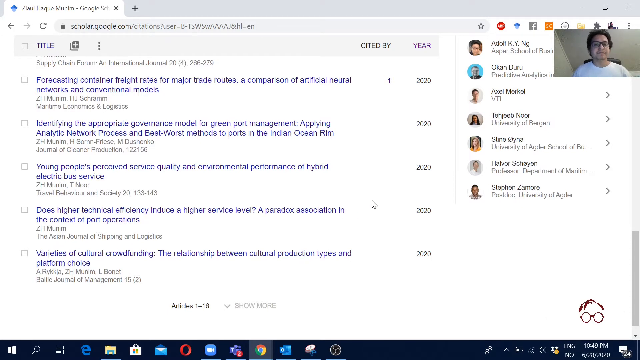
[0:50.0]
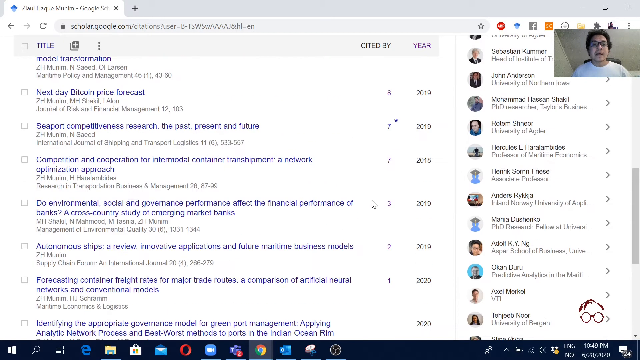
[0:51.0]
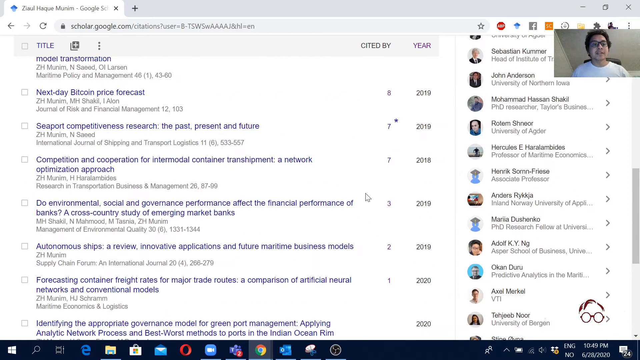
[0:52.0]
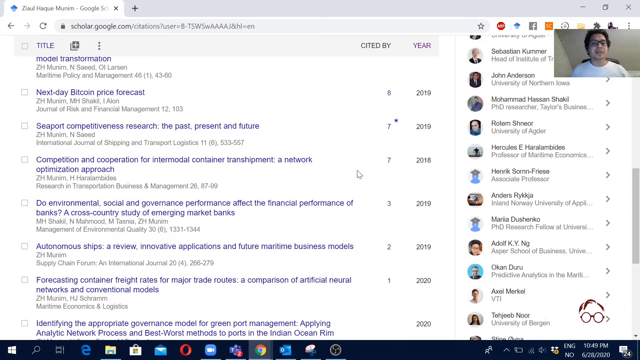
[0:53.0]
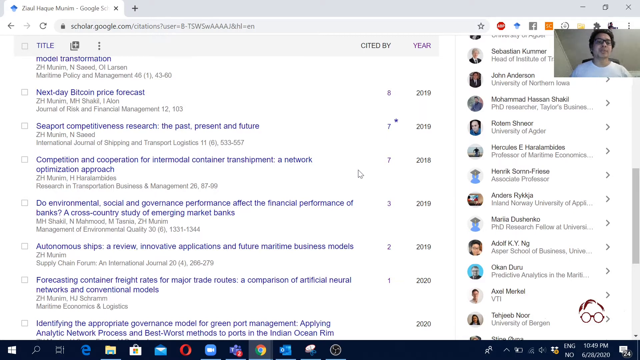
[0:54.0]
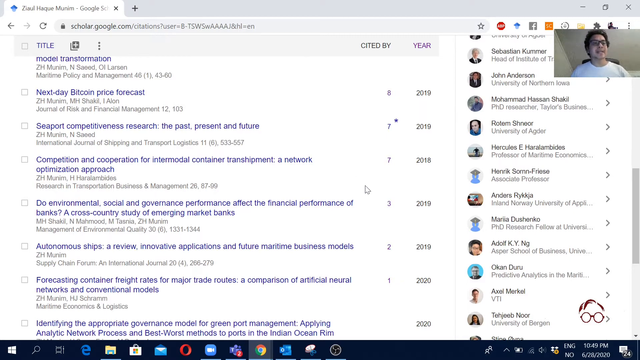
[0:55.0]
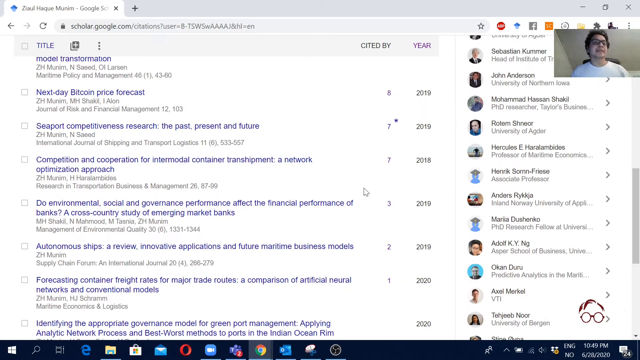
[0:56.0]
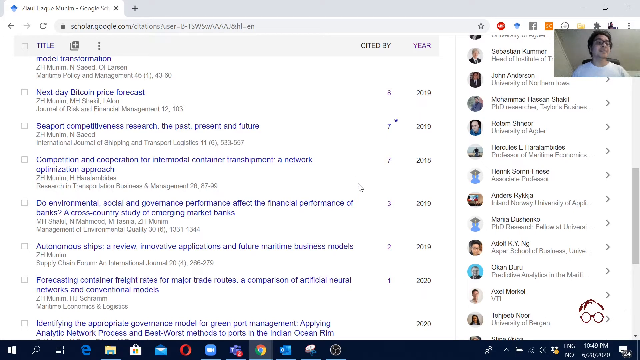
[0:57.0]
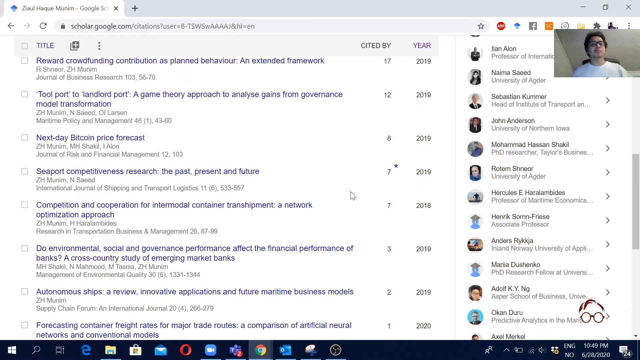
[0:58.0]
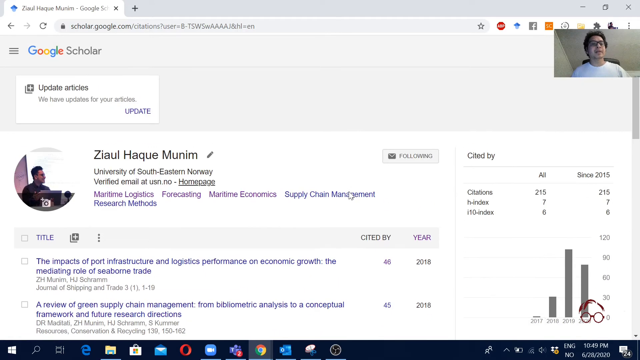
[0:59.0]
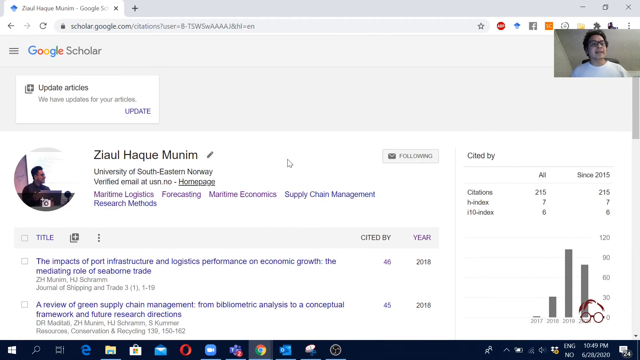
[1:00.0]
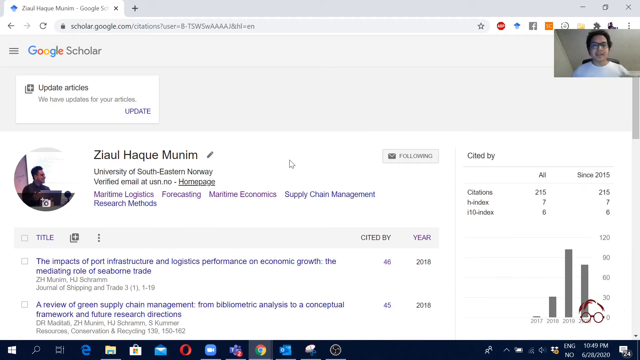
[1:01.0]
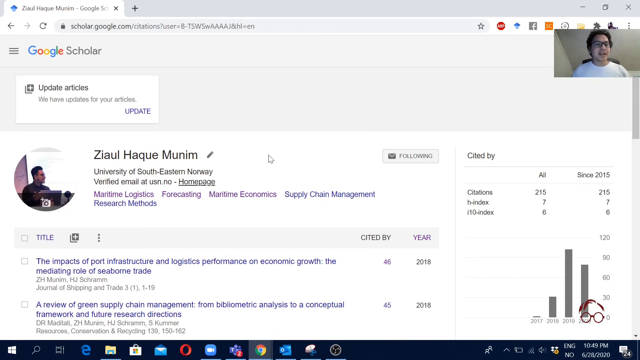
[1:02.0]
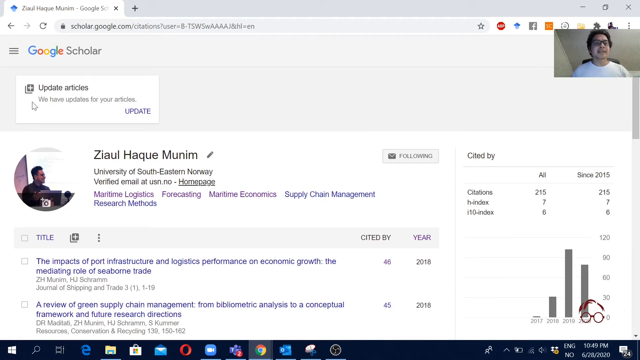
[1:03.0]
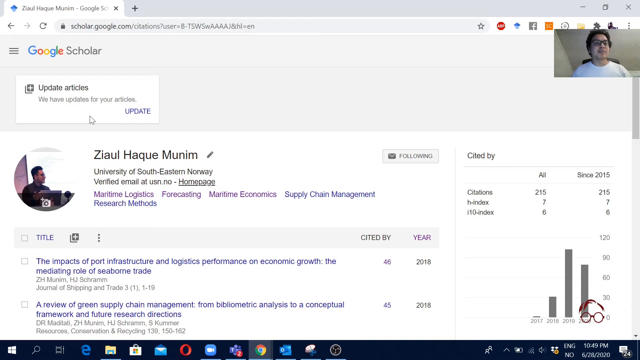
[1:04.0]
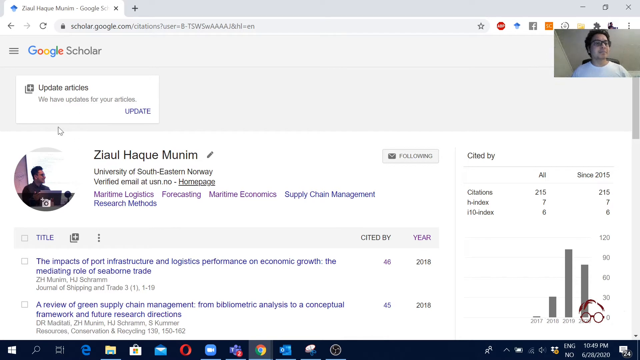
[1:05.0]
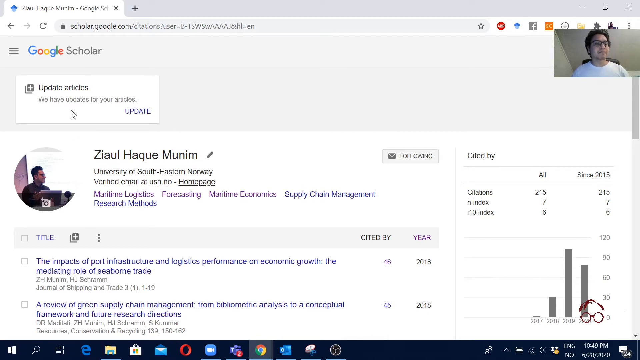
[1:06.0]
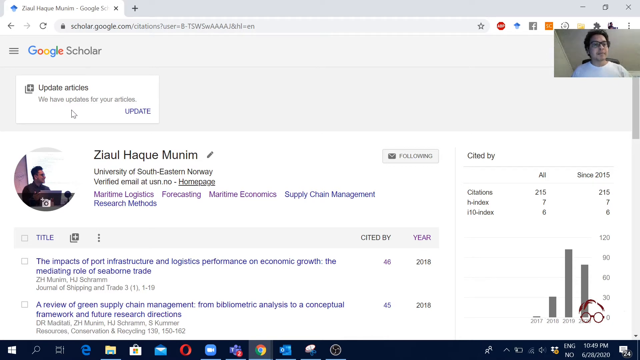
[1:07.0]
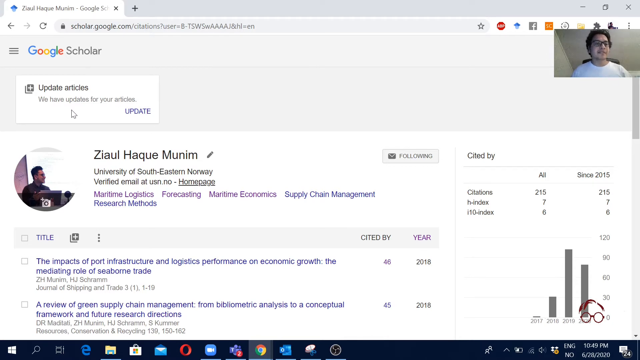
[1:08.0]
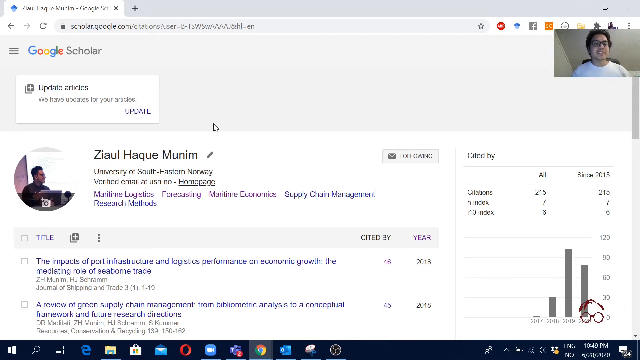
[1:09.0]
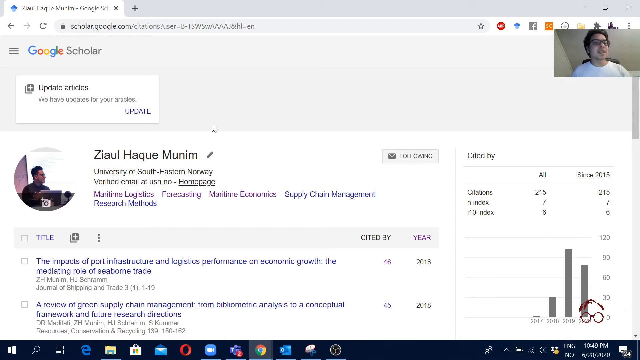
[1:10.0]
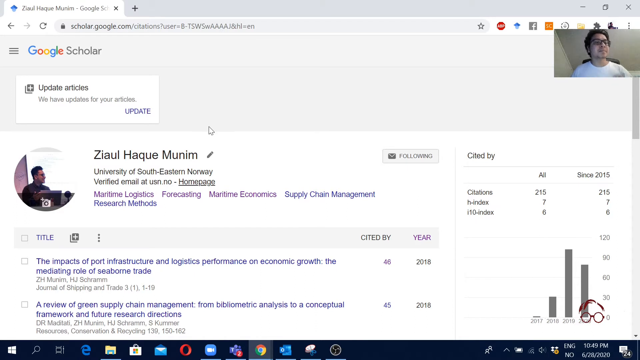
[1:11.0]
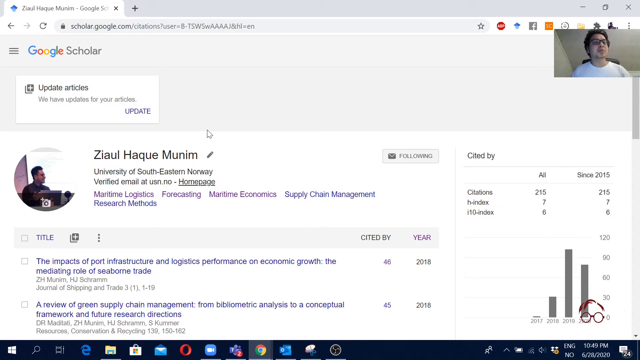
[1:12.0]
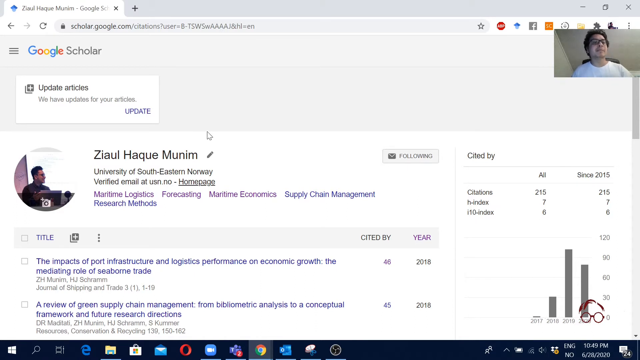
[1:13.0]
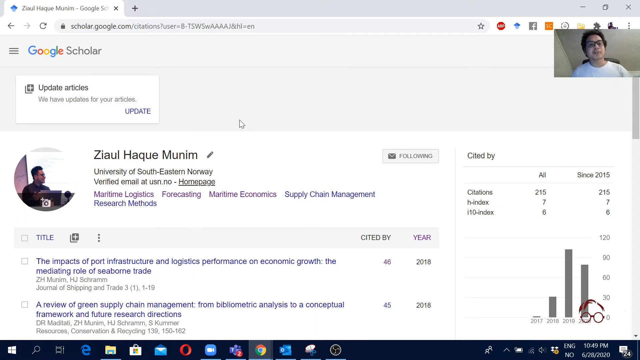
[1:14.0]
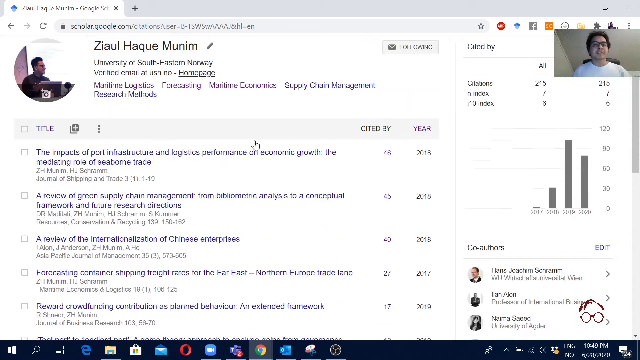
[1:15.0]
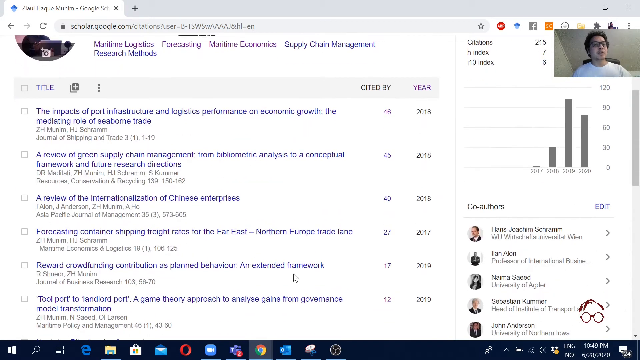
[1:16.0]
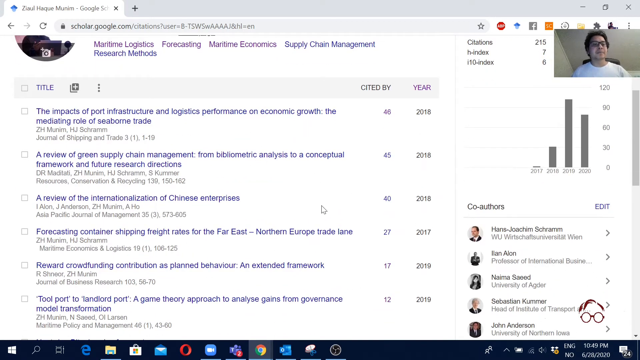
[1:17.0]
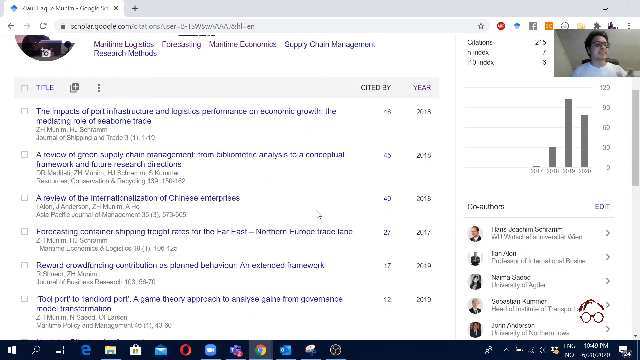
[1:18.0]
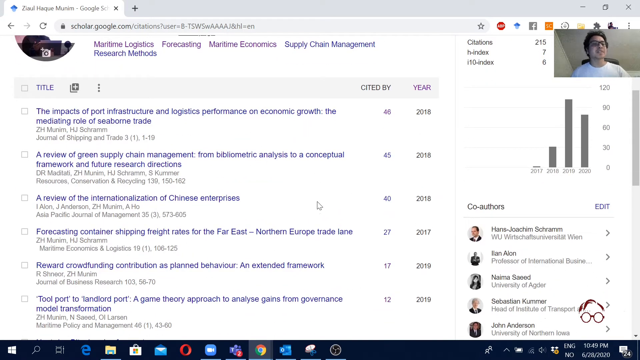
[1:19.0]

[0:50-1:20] In a computer tutorial, the man's picture is in the upper right-hand corner while he moves the cursor around. The cursor goes up to his information and then to where it says "update articles", and he circles the cursor around that. As he talks, he hovers the cursor toward the top, then makes a clockwise circle around four of the articles toward the bottom, showing that section as he spins the cursor. In the picture, he continues to talk while the cursor moves, so both happen at once.